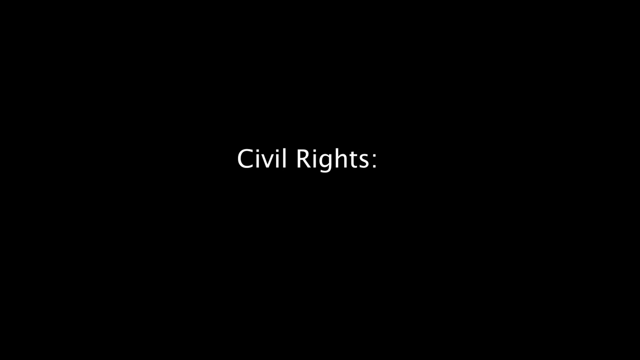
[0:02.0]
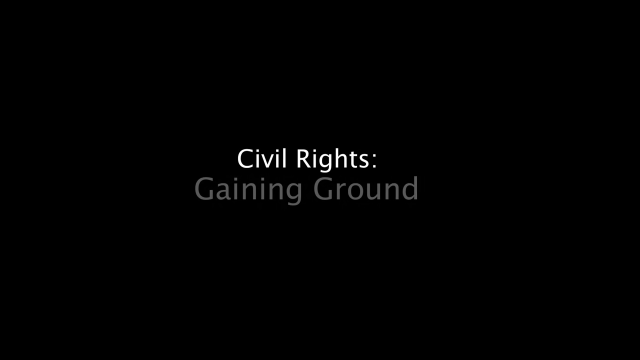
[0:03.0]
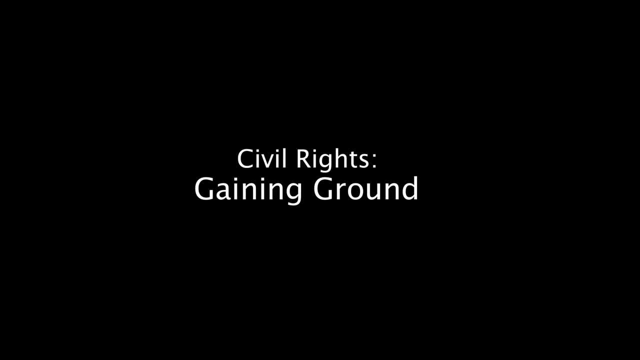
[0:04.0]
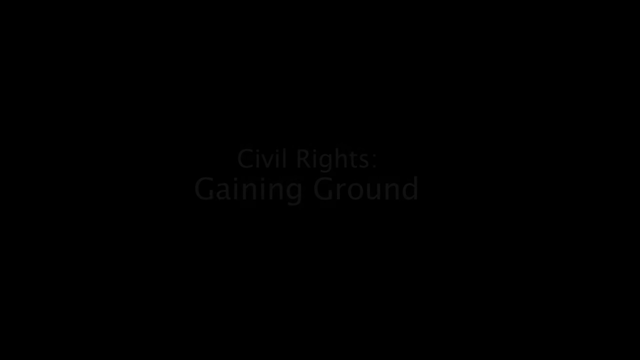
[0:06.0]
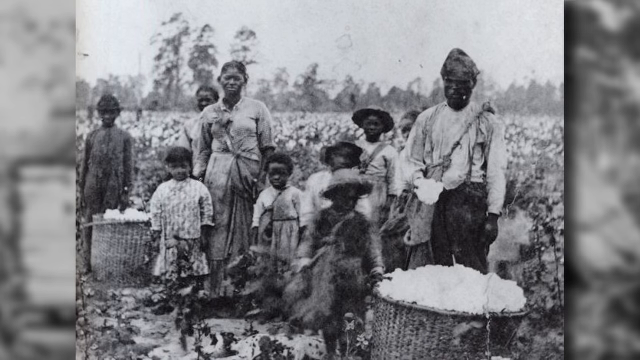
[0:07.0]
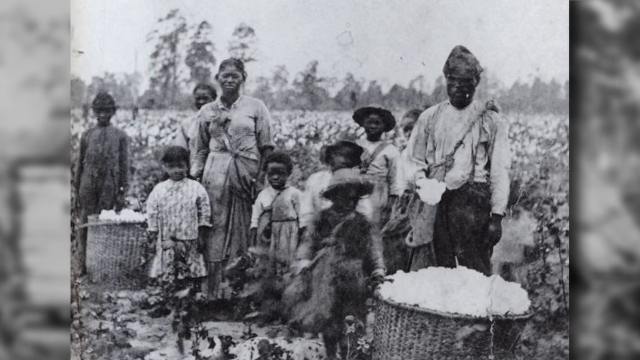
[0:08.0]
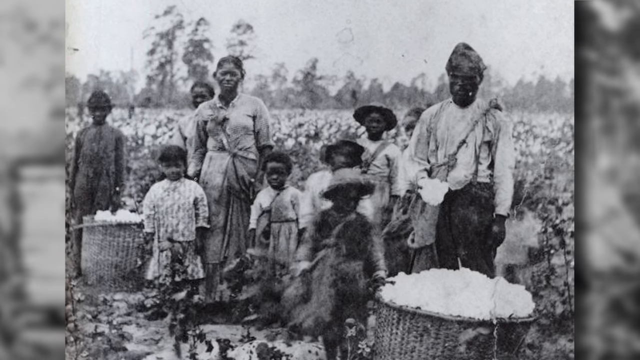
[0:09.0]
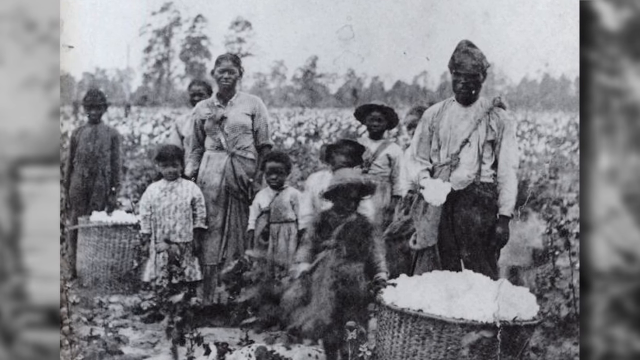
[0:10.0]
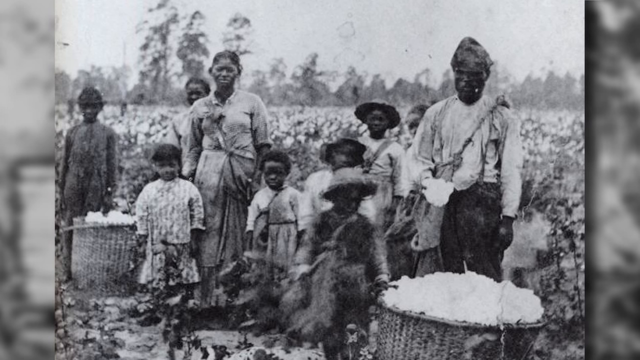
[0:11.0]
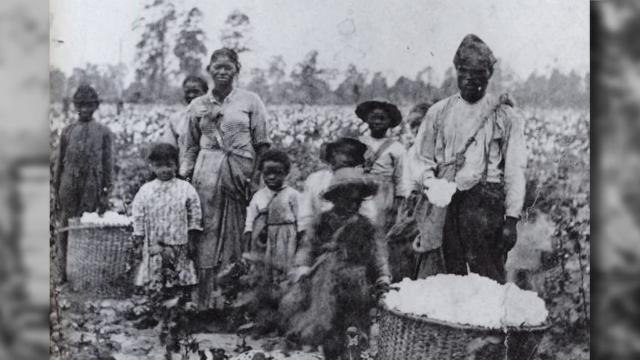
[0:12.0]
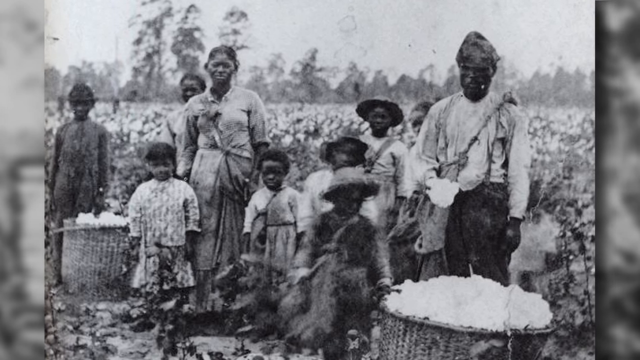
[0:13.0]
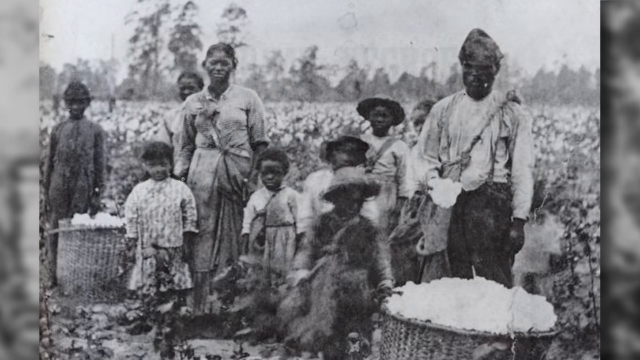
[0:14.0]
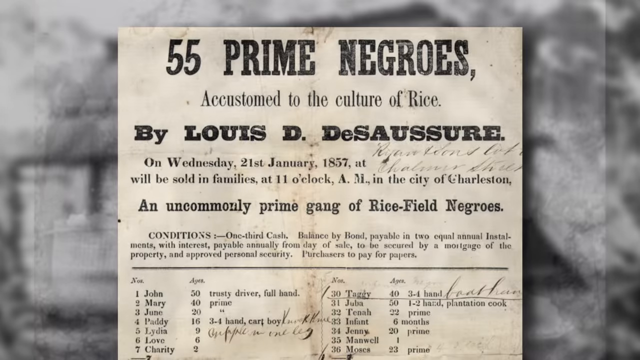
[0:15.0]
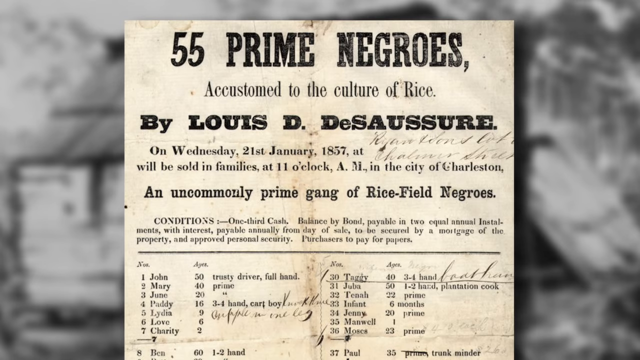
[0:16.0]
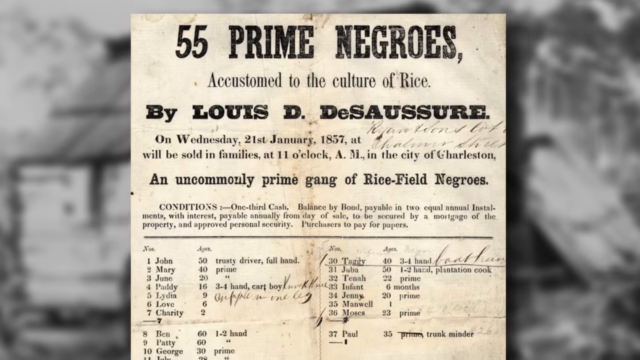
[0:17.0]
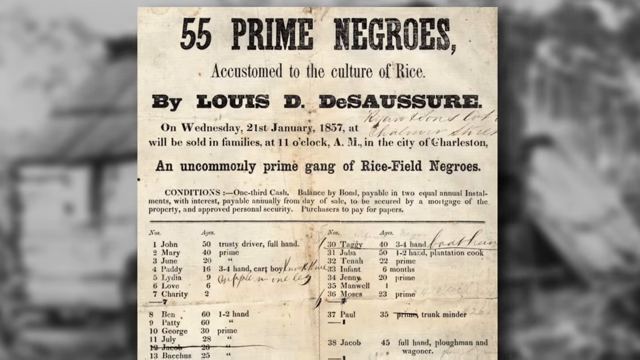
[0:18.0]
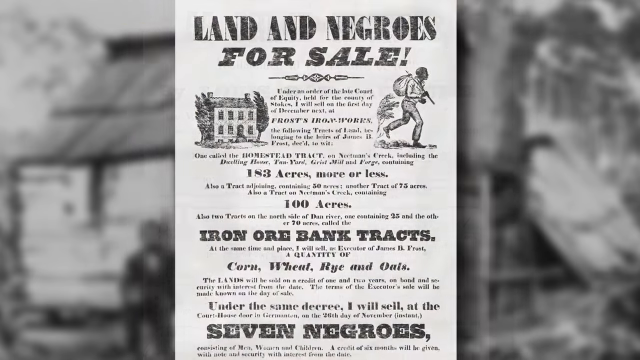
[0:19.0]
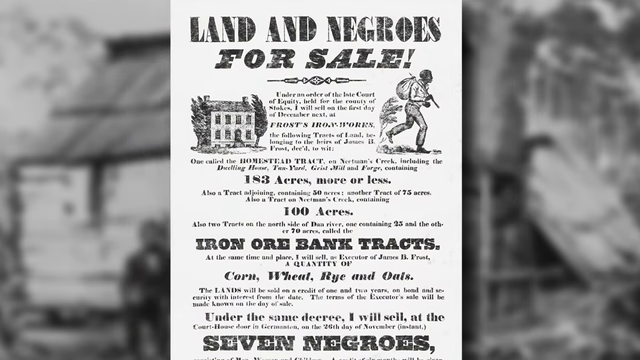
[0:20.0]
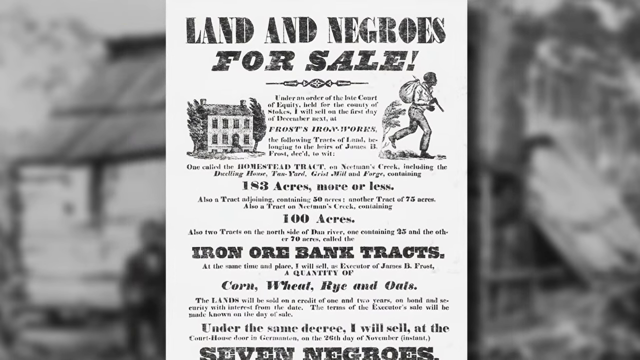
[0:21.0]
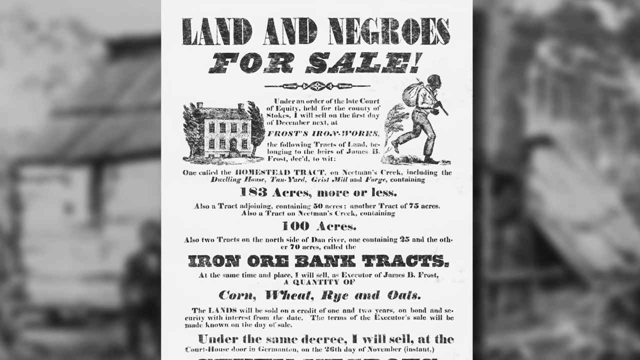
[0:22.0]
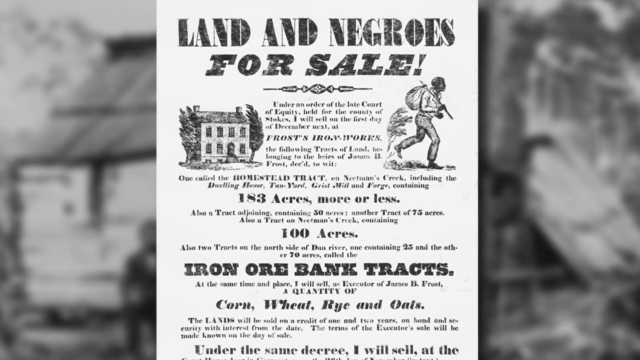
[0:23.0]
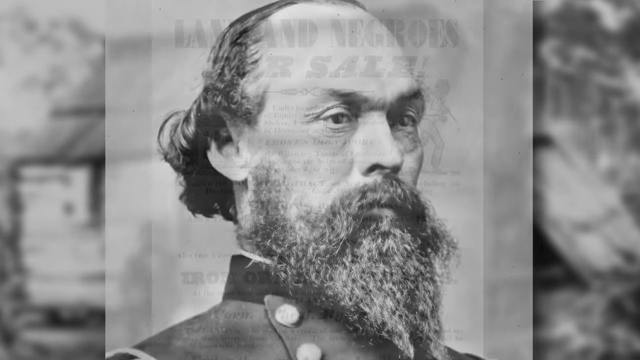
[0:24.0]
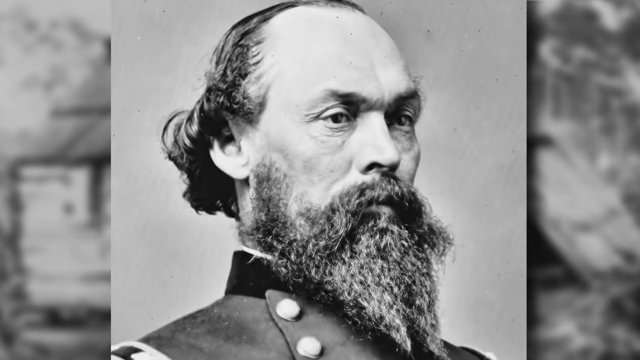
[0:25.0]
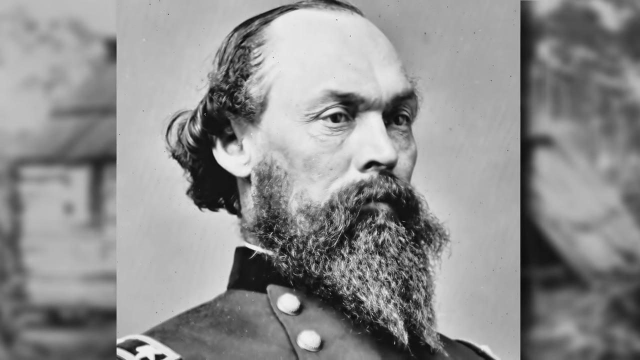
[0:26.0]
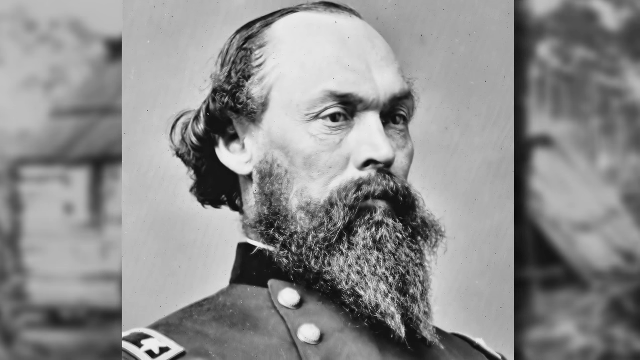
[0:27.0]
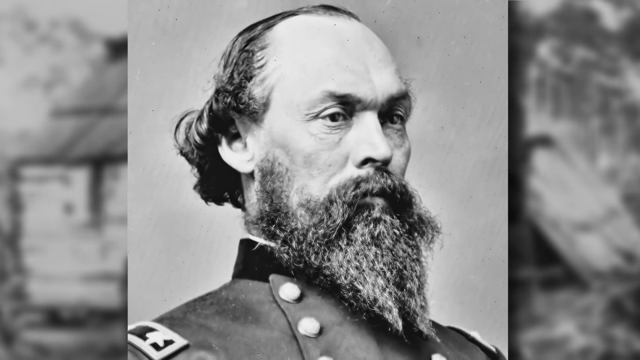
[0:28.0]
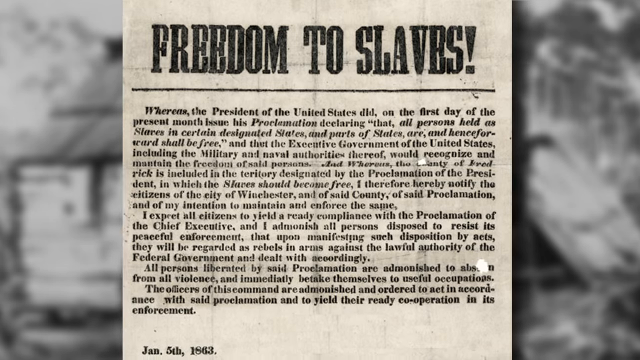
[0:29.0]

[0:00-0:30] The text "civil rights gaining ground" appears, followed by pictures of African American fathers and mothers with their kids out in a field picking cotton. A printed notice follows with text including "55 proud Negroes accustomed to the culture of rice", a date of "Wednesday, 21st January 1857", "will be sold in families at 11 o'clock", and other lines; one entry describes a person as a "trustee driver". Further text includes "Negros for sale" and "corn, wheat, rye and oats". A Caucasian man in a military-looking suit is shown, possibly a slave owner. The text "freedom to slaves" then appears on what looks like some type of document.